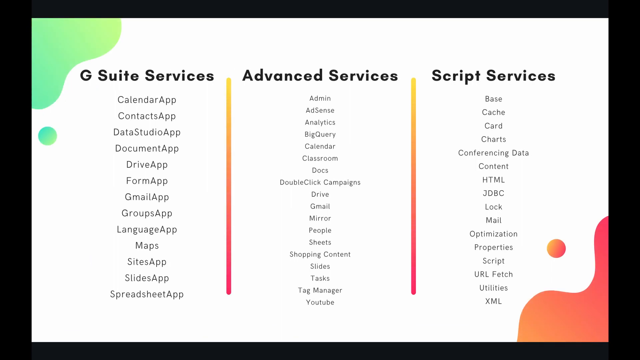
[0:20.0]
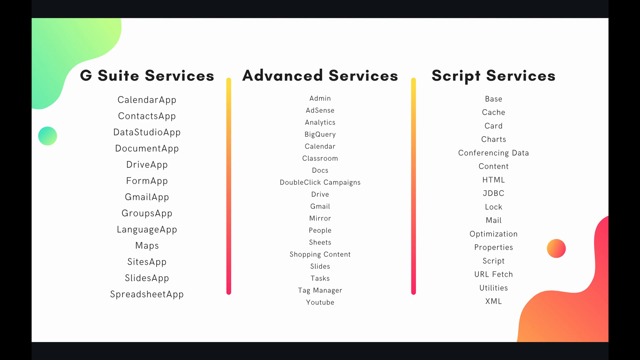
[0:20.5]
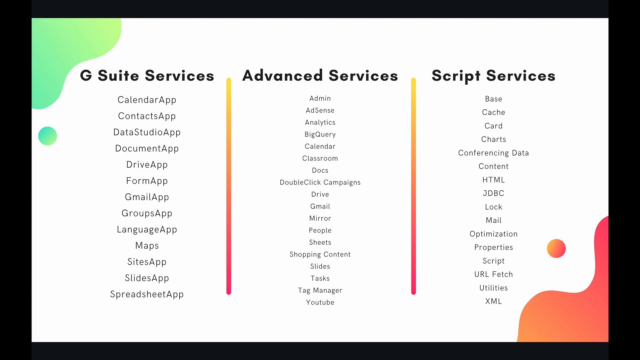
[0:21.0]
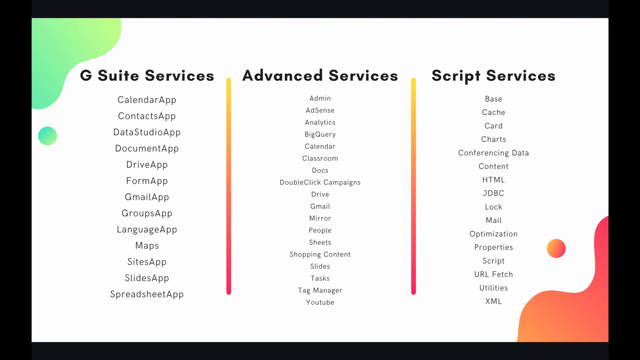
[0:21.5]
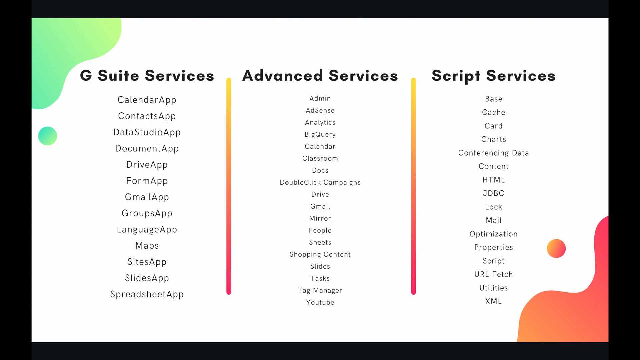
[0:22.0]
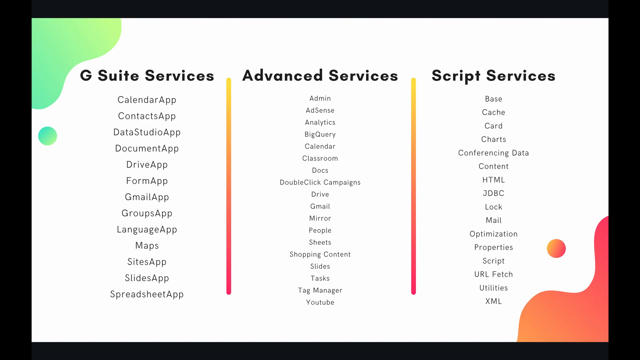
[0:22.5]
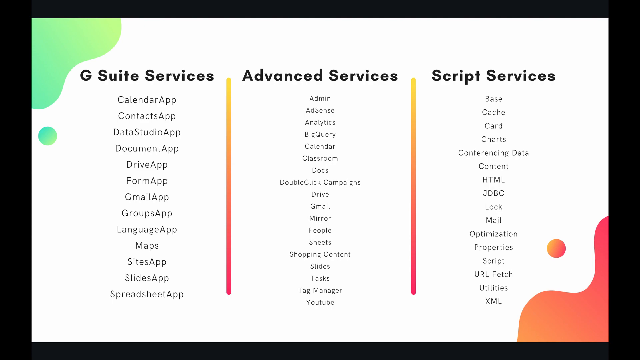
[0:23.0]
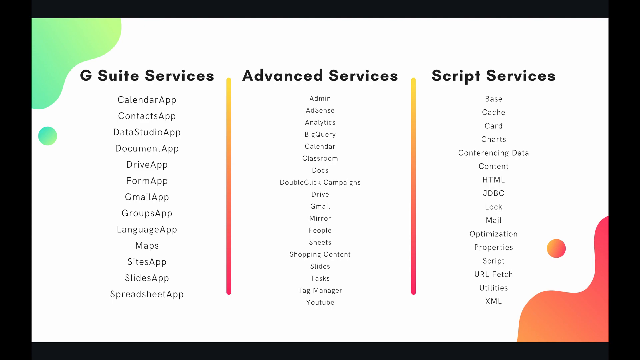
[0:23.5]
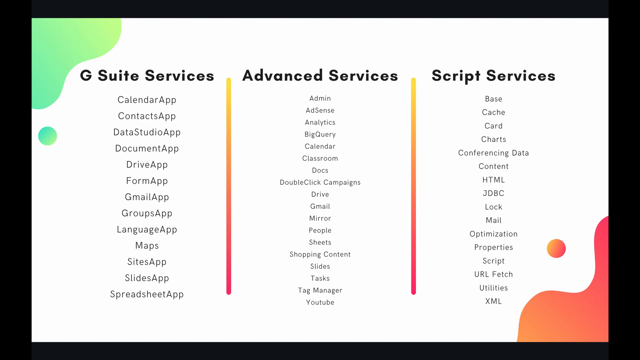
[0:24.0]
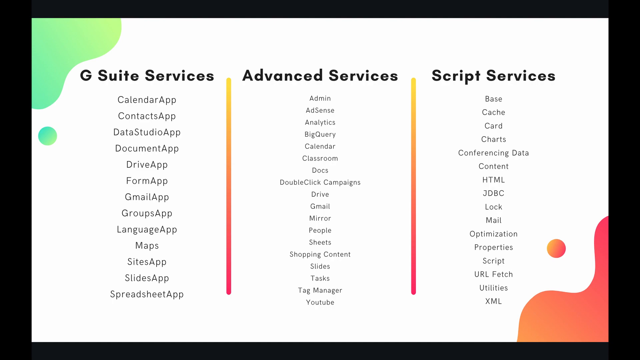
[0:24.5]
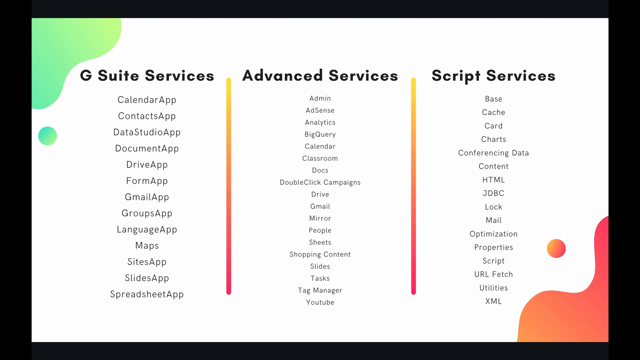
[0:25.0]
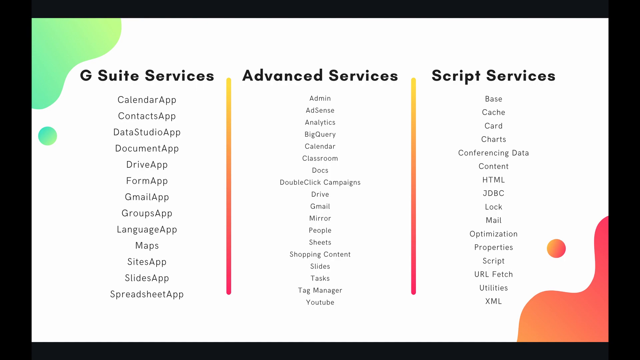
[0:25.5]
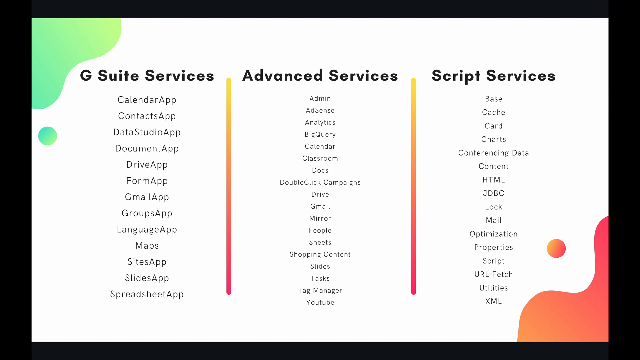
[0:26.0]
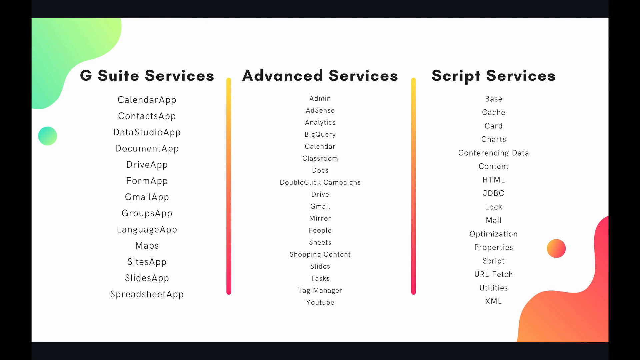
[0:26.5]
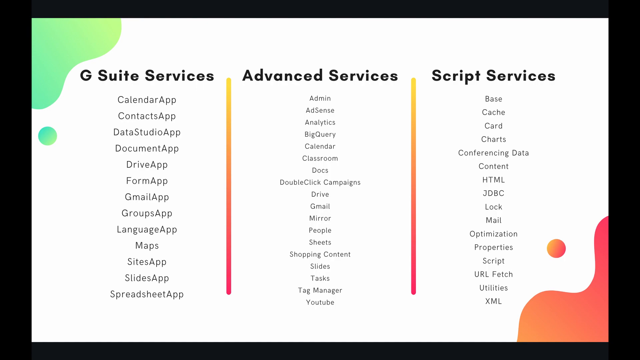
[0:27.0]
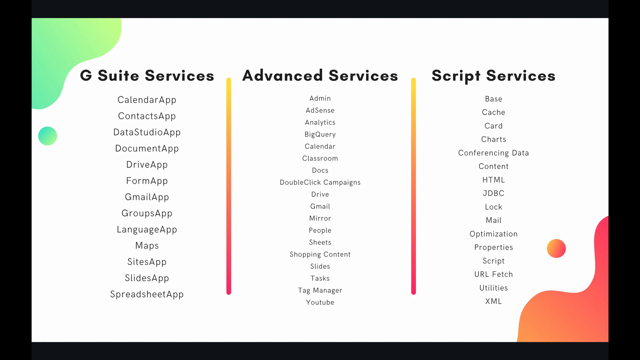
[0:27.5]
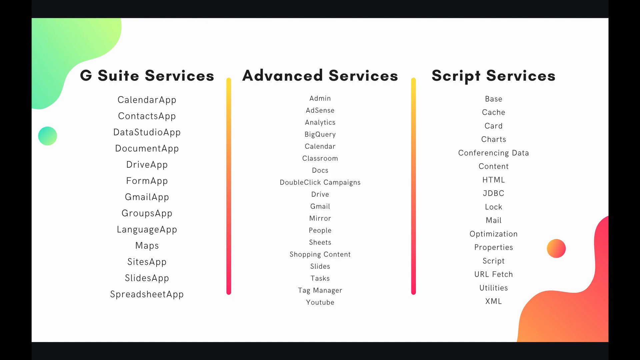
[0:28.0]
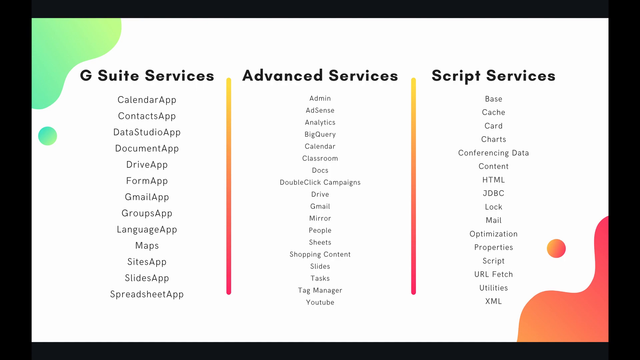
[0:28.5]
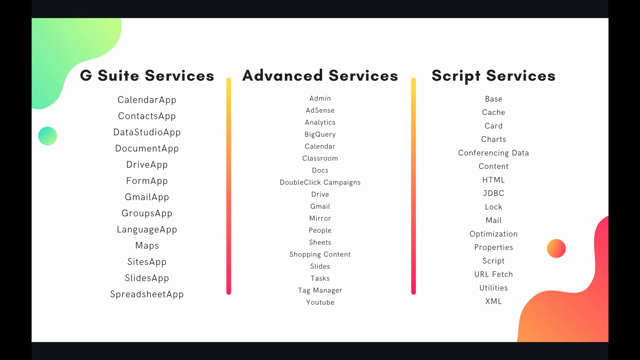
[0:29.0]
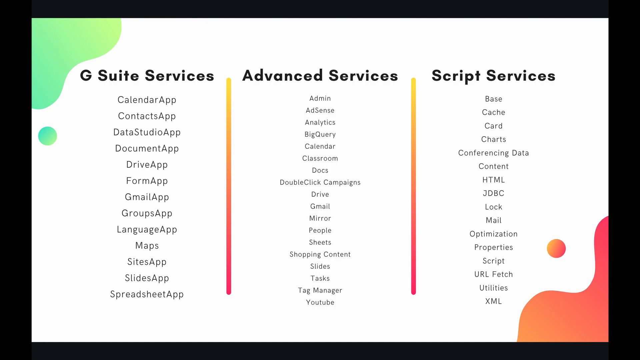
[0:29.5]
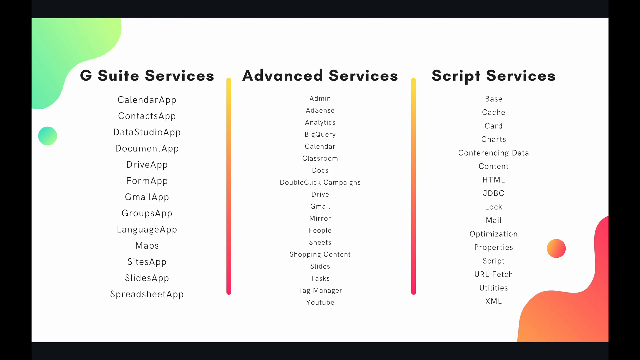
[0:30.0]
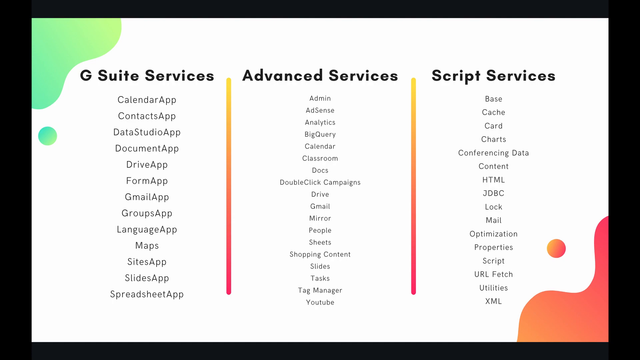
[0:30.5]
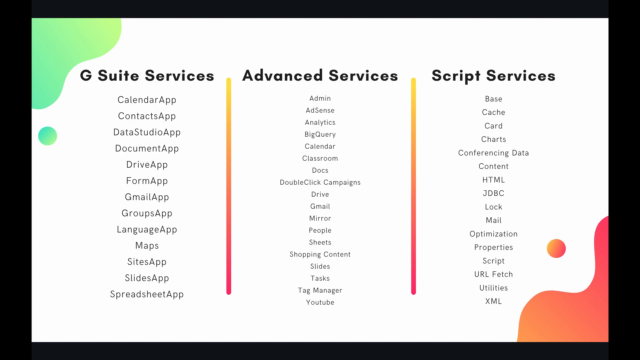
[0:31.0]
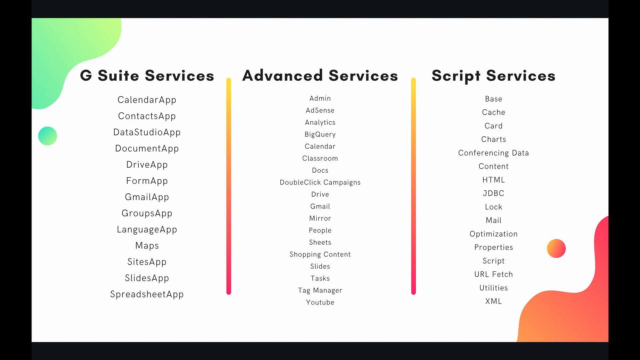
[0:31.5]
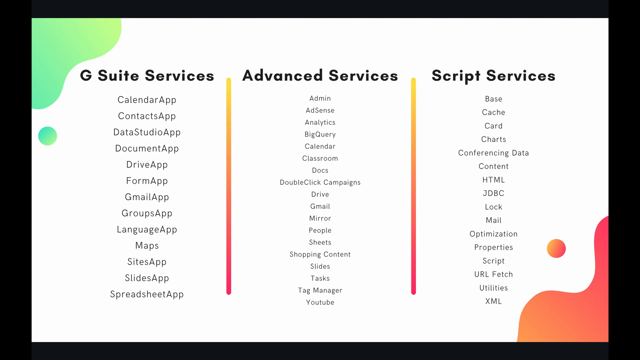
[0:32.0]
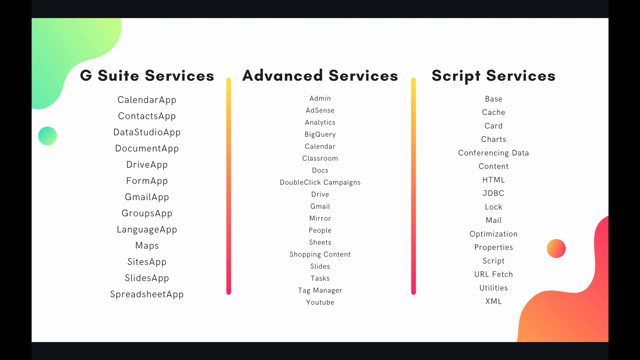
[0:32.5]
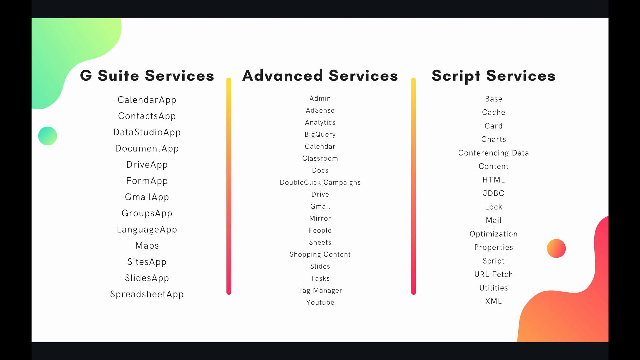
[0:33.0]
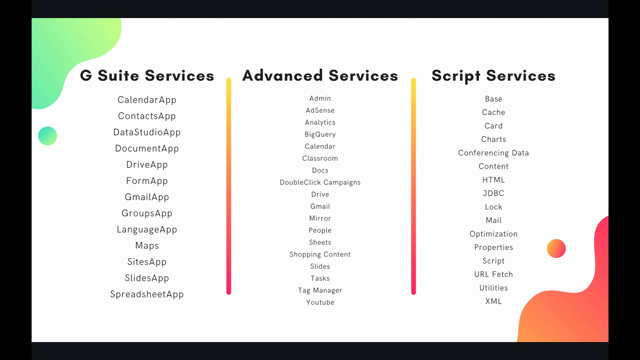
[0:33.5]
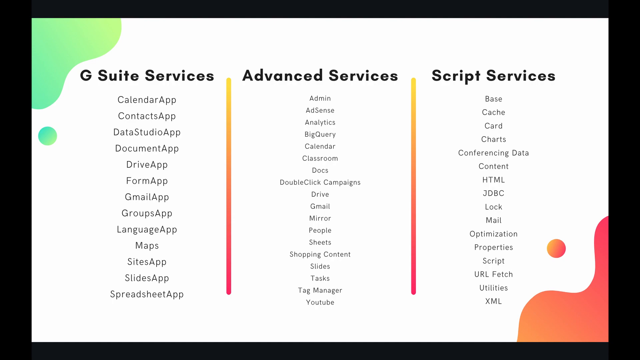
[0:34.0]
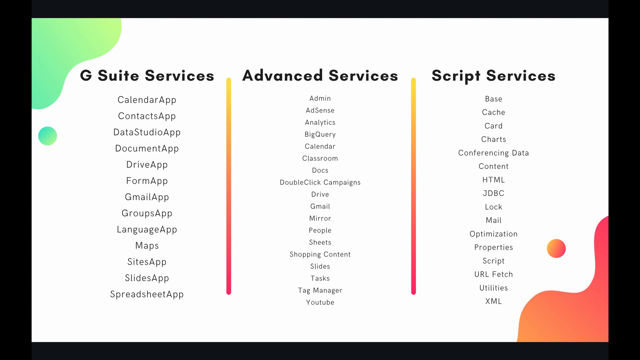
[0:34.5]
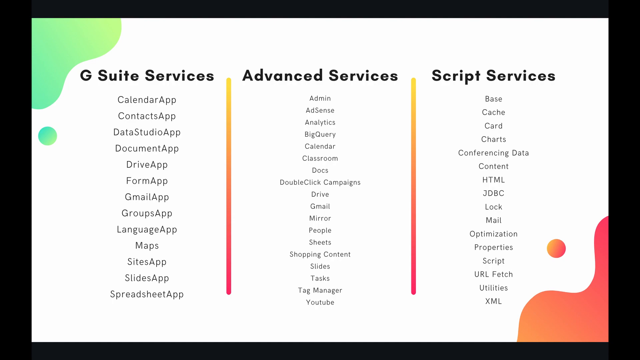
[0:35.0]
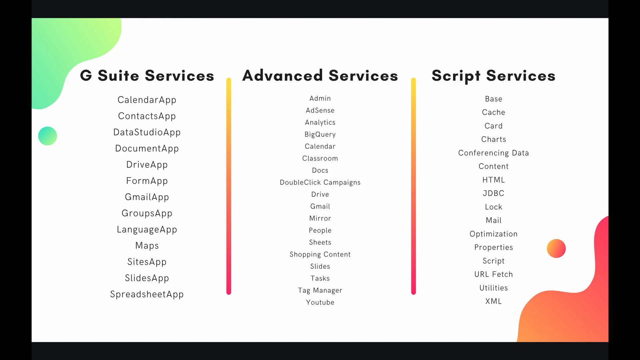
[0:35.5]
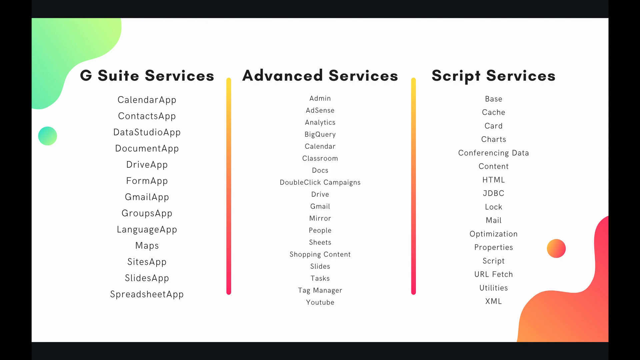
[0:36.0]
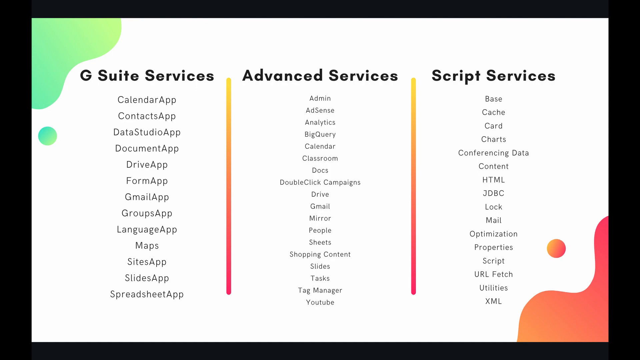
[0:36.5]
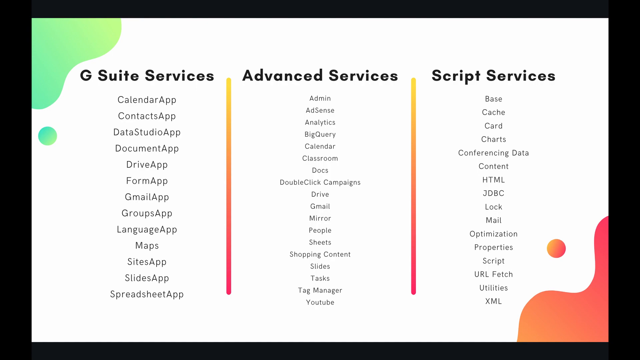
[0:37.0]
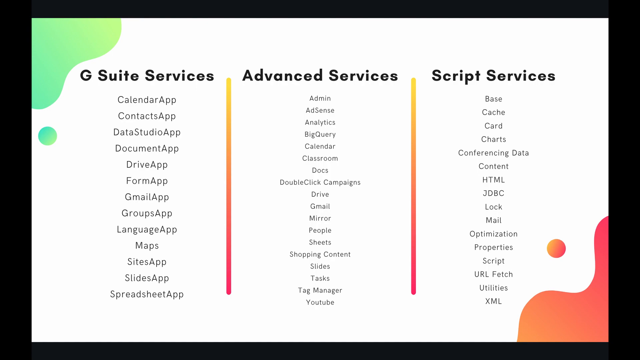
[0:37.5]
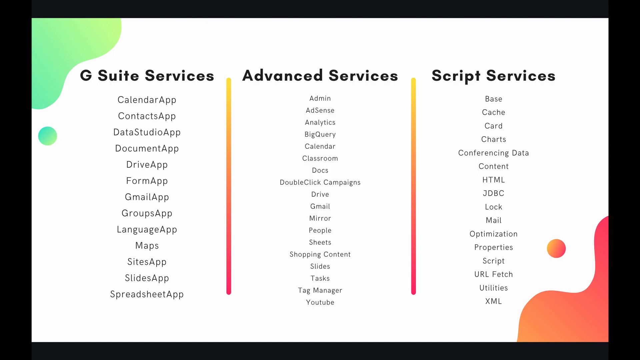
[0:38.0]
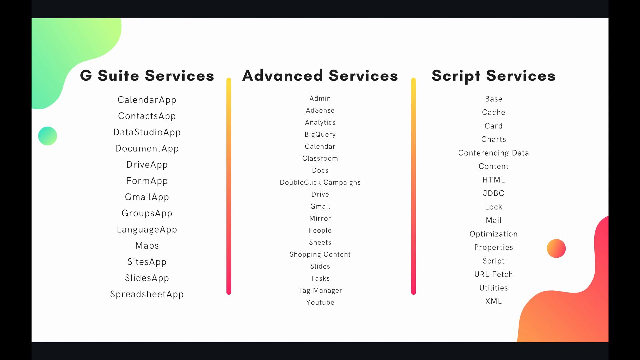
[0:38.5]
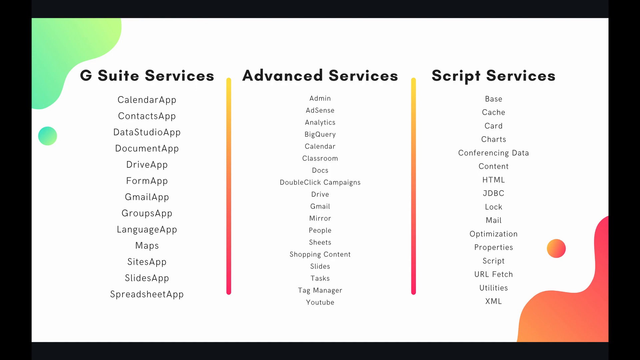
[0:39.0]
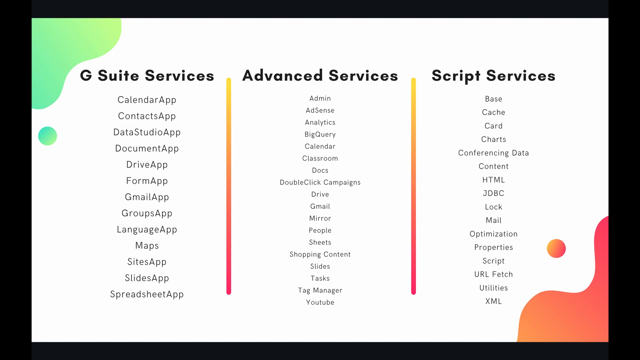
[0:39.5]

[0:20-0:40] Three columns are on a white background, with small blobs of color in the corners. In the top left corner is an aqua green blob with a small circle of the same color below it. In the lower right corner is a reddish-orange blob with a circle of the same color to its top left. The three columns have bolded titles: the left column is "G Suite Services", the one to its right "Advanced Services", and the far right "Script Services". Under G Suite Services are Calendar App, Contacts App, Data Studio App, Document App, Drive App, Form App, Gmail App, Groups App, Language App, Maps, Sites App, Slides App, Spreadsheet App. Under Advanced Services are Admin, AdSense, Analytics, BigQuery, Calendar, Classroom, DoubleClick Campaigns, Drive, Gmail, Mirror, People, Sheets, Shopping Content, Slides, Task, Tag Manager, YouTube. Under Script Services are Base, Cache, Card, Charts, Conferencing Data, Content, HTML, JDBC, Lock, Mail, Optimization, Property, Script, URL Fetch, Utilities, and XML. The screen holds for several seconds with no animation. Between the columns are two vertical lines of color, orange at the top and growing more red toward the bottom.